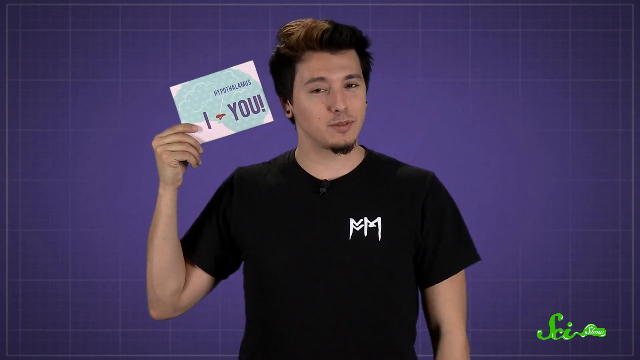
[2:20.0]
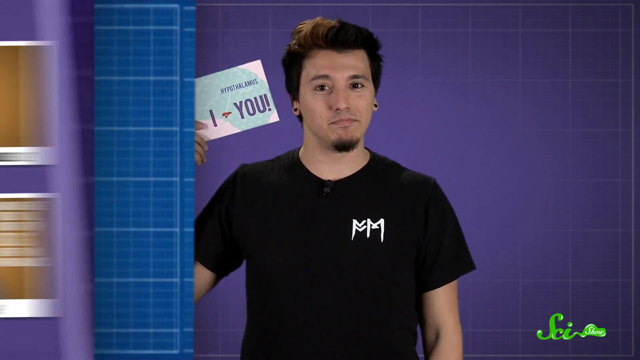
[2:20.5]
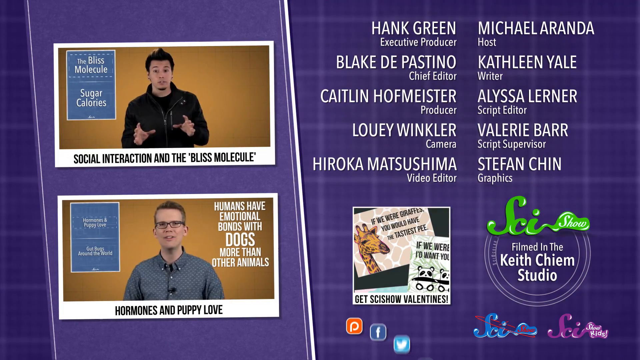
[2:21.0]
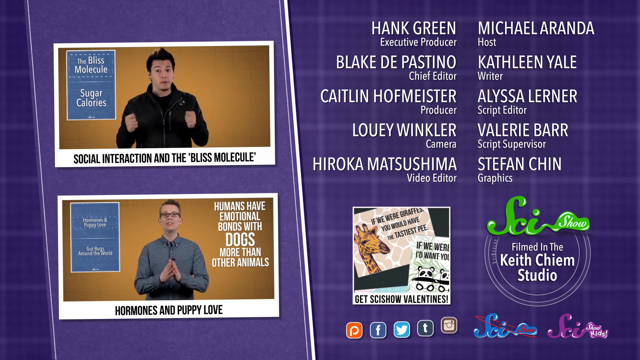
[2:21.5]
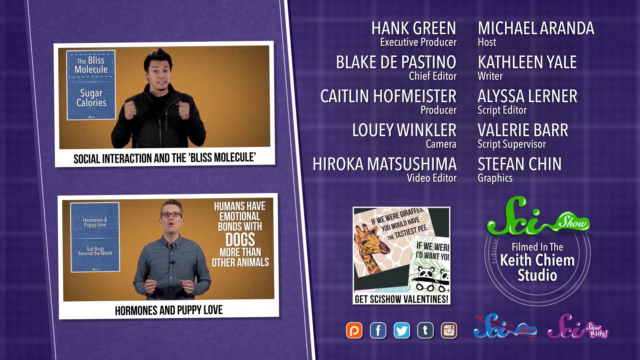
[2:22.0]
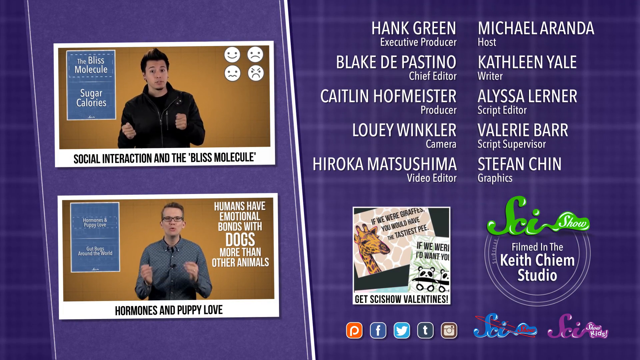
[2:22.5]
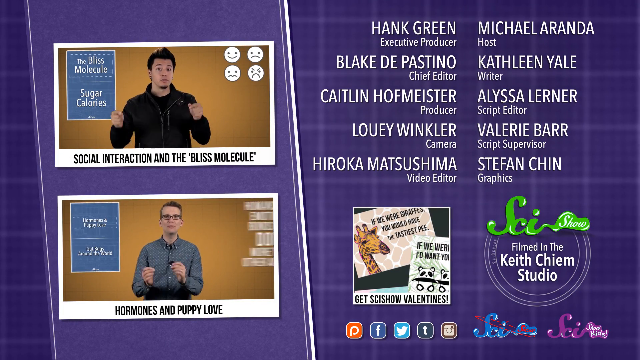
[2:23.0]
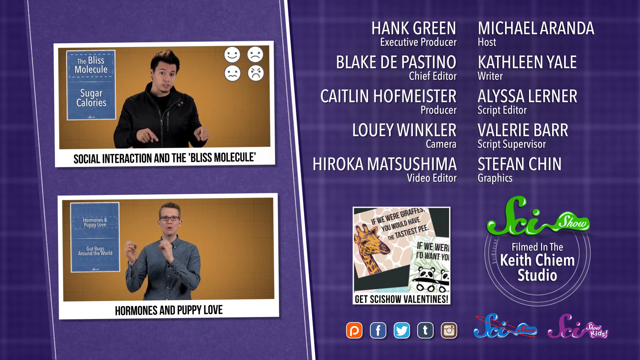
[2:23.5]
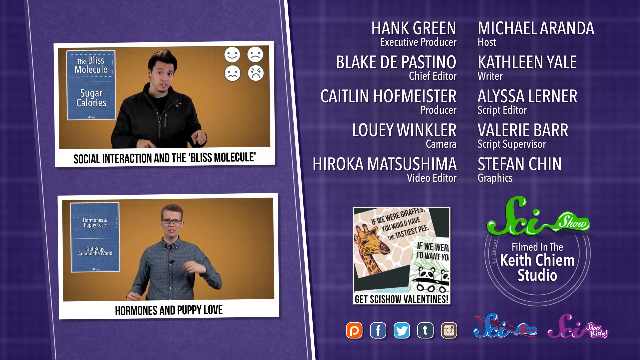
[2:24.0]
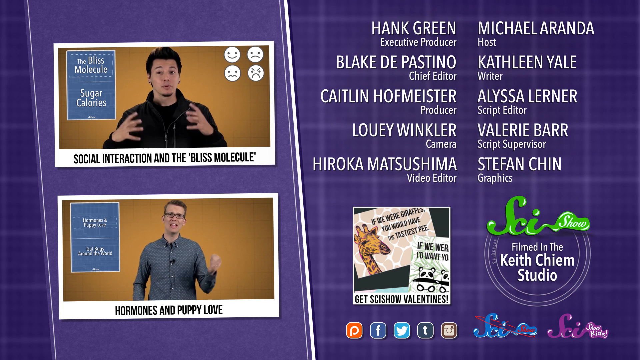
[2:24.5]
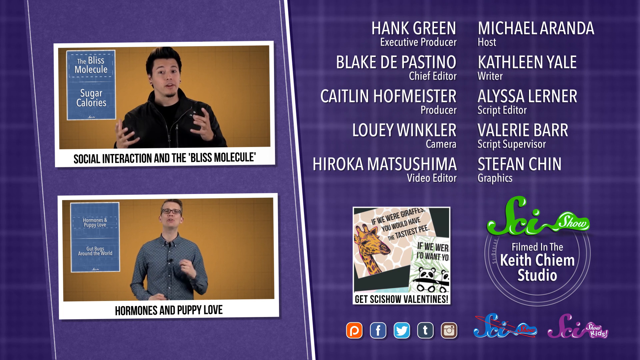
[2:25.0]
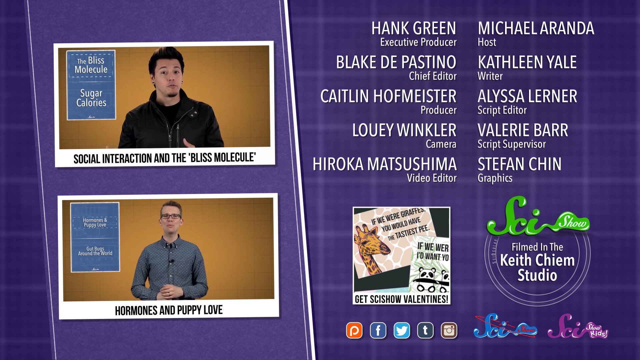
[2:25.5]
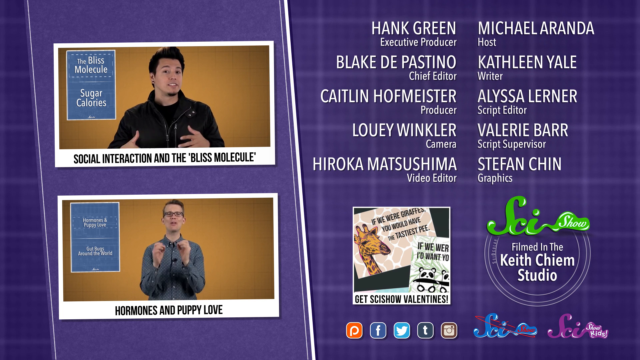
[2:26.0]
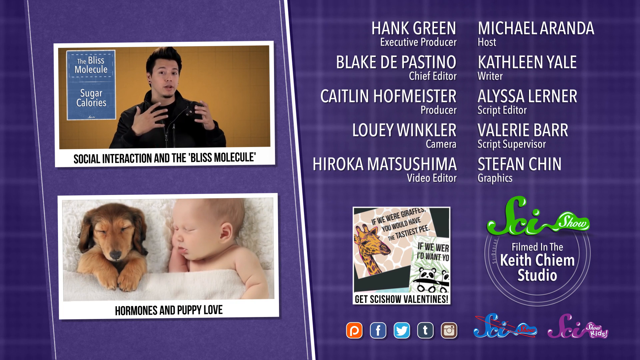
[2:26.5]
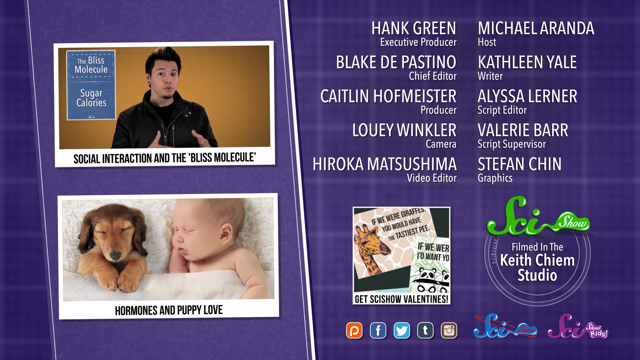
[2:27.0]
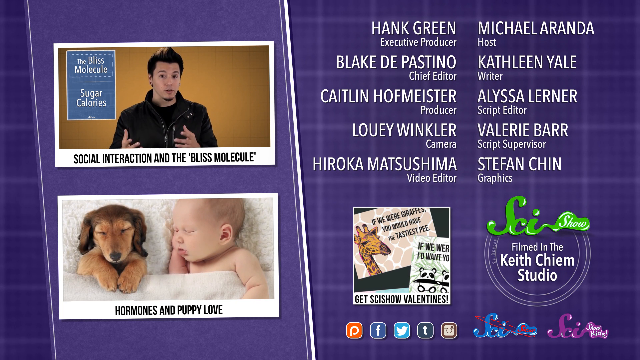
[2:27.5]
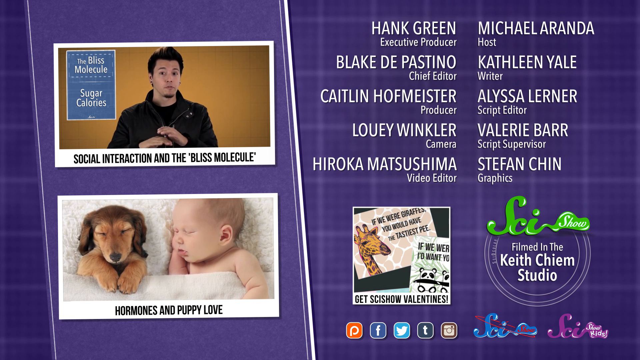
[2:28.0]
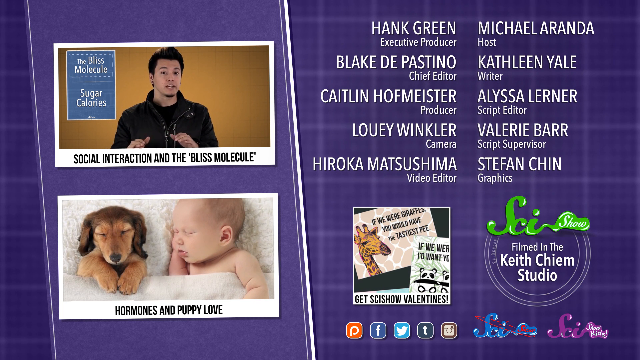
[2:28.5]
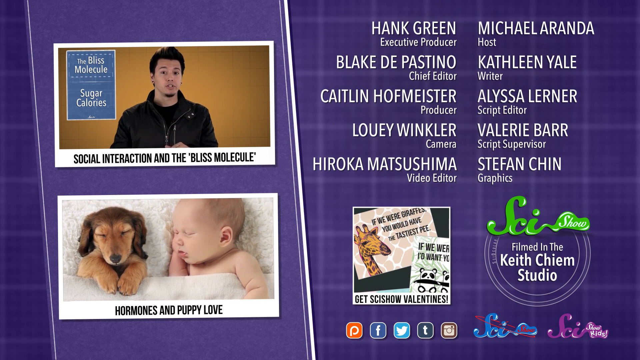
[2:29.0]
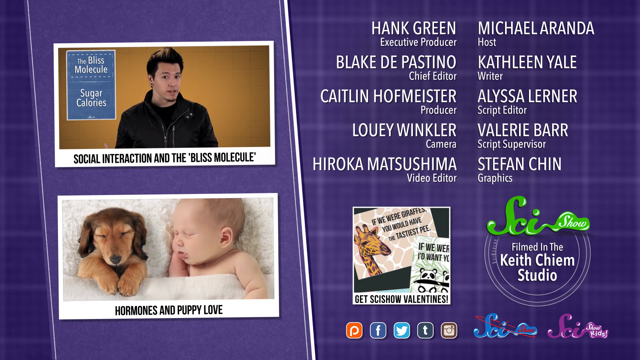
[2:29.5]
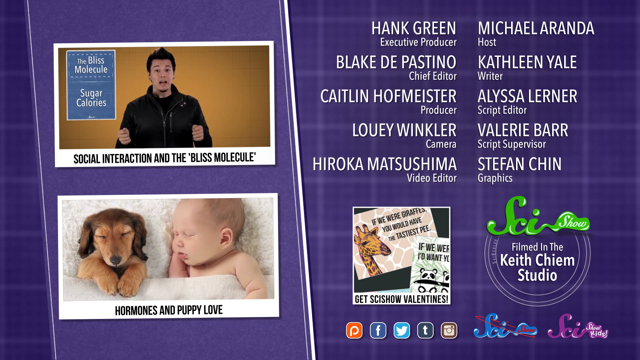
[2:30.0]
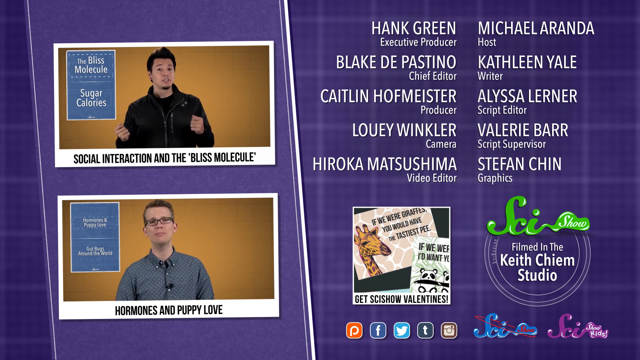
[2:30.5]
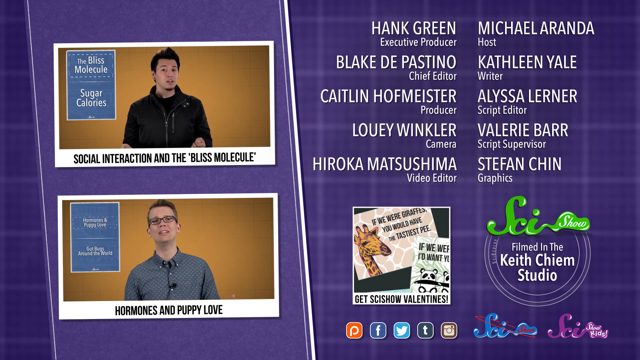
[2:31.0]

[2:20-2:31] A young man wears a black T-shirt with two white letter Ms side by side on the left side of the chest. He holds up a card in his right hand that says "I love you," written in purple on a mostly green and white background. He is standing against the purple background and speaking. A closing screen then transitions in, with a purple background. On the left side are two video inserts, one above the other, and on the right side are the names of the production crew, displayed in two columns with five names in each column.